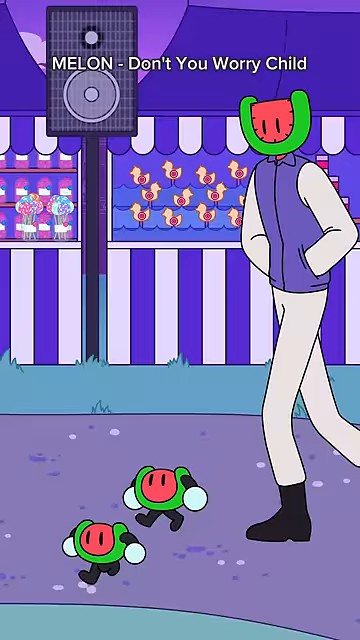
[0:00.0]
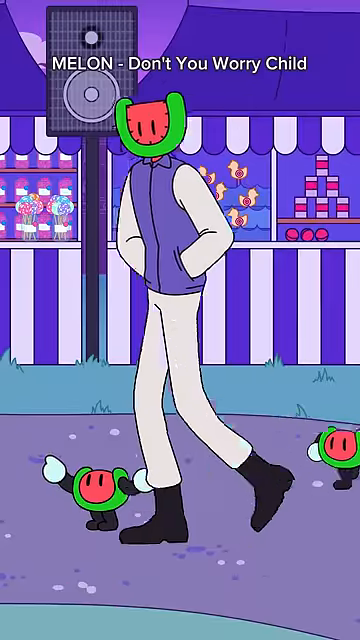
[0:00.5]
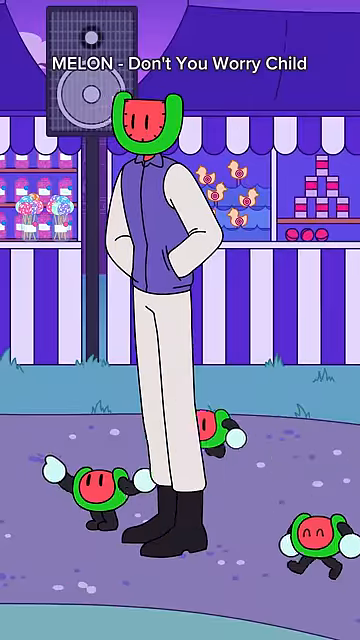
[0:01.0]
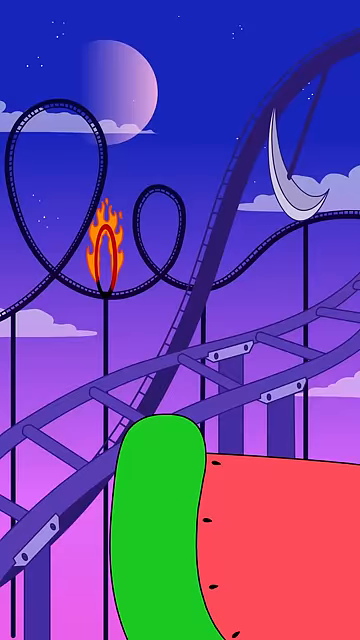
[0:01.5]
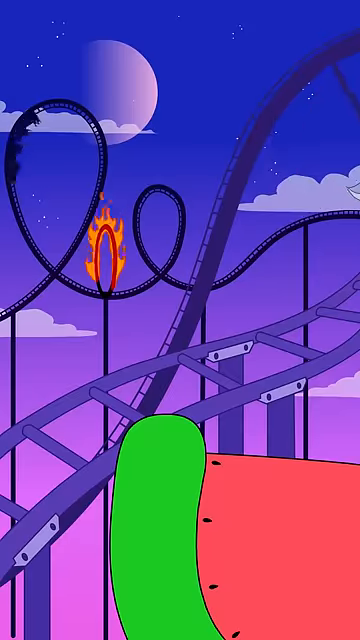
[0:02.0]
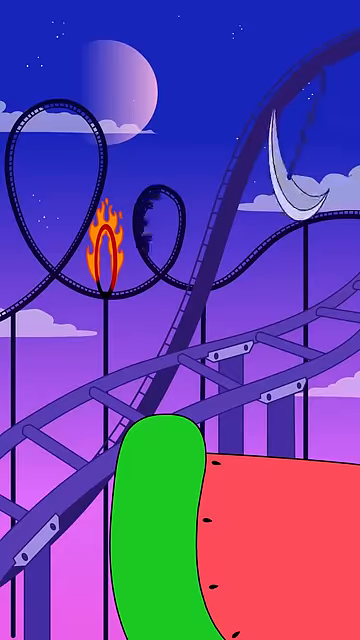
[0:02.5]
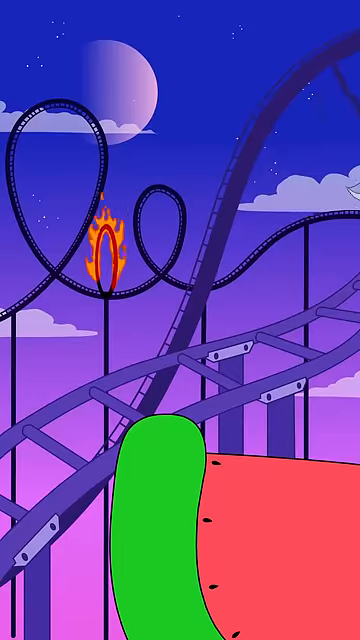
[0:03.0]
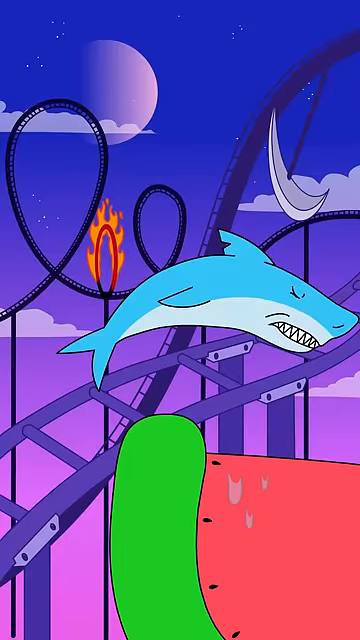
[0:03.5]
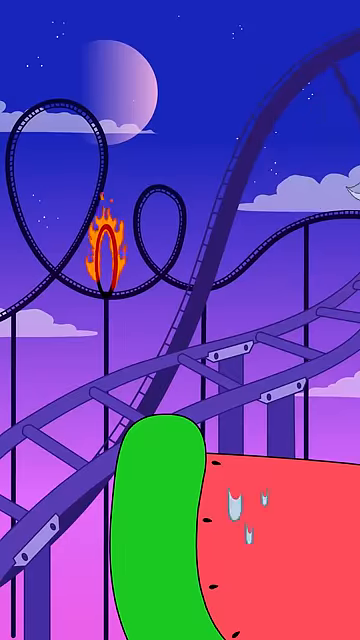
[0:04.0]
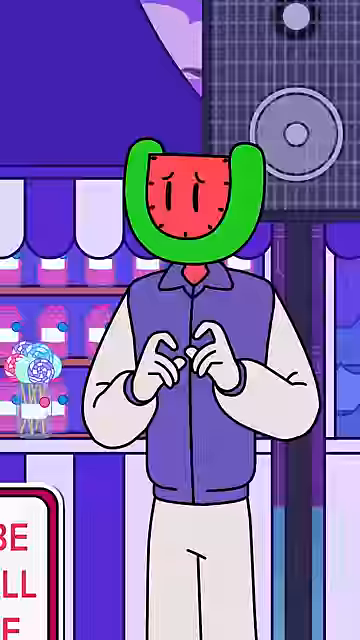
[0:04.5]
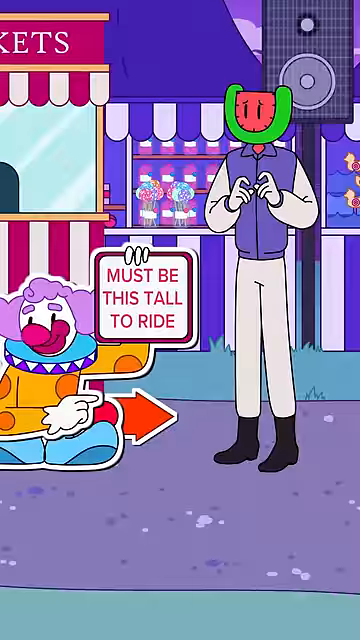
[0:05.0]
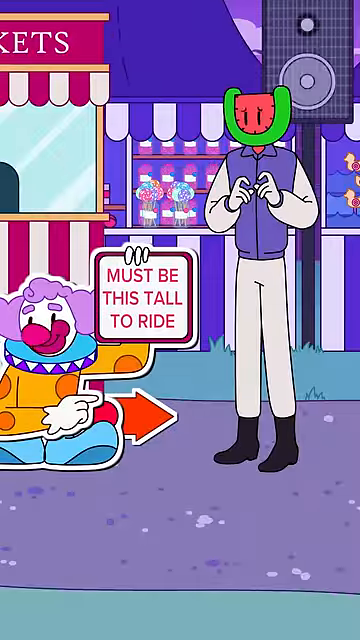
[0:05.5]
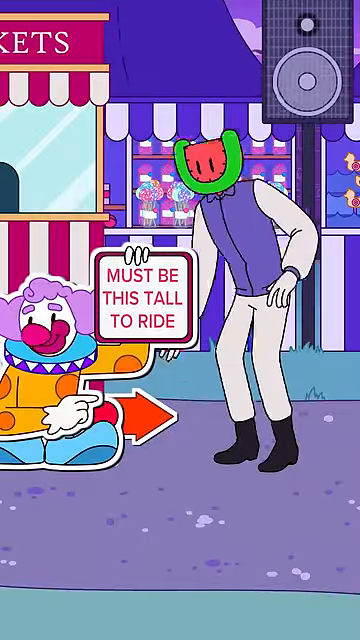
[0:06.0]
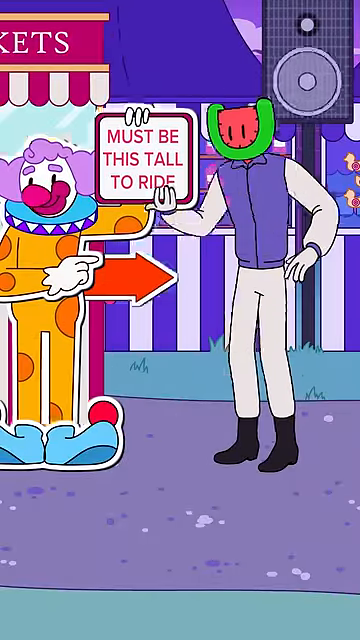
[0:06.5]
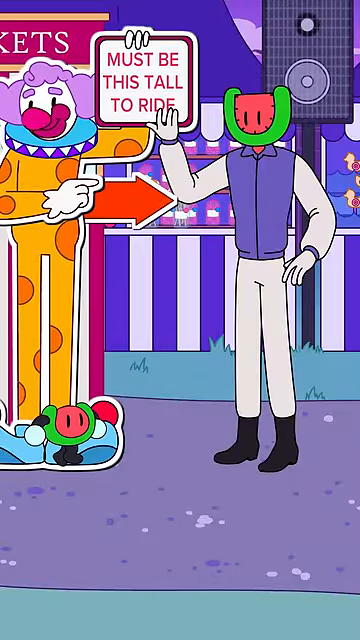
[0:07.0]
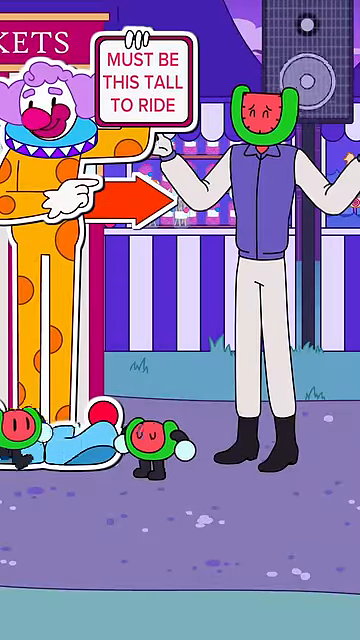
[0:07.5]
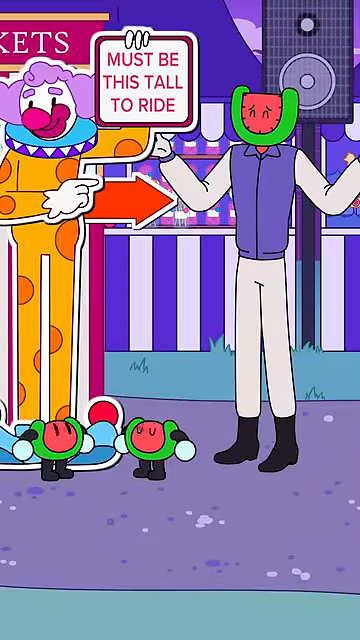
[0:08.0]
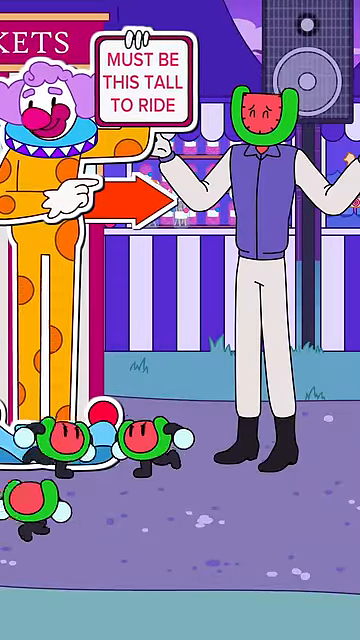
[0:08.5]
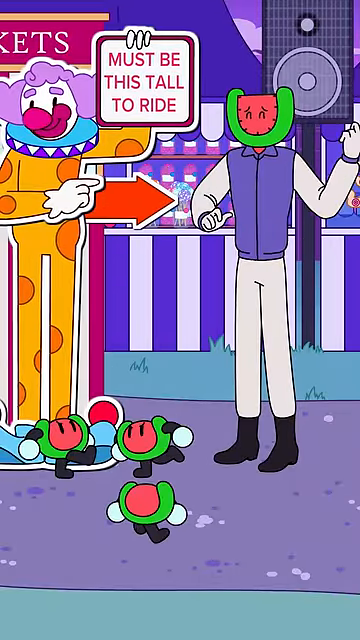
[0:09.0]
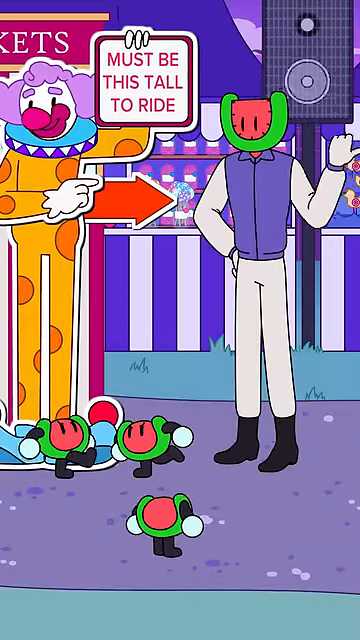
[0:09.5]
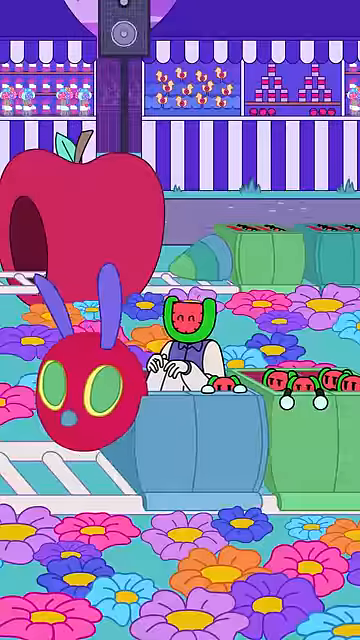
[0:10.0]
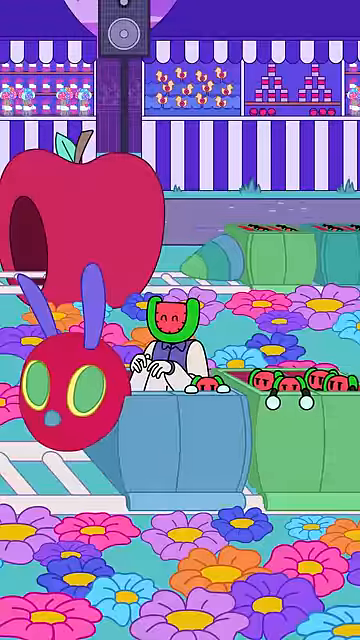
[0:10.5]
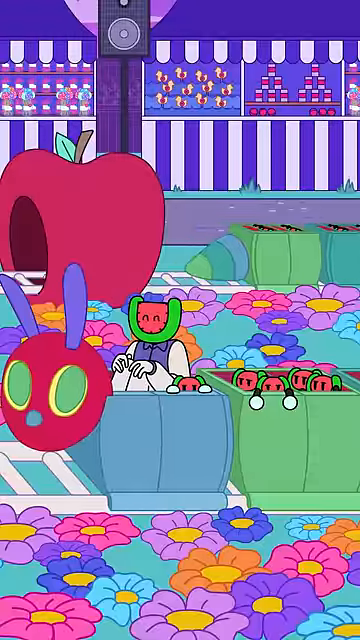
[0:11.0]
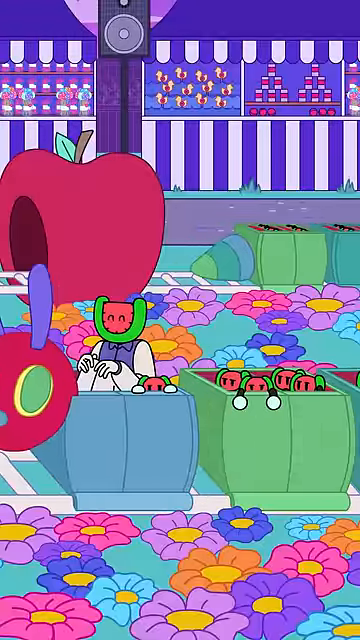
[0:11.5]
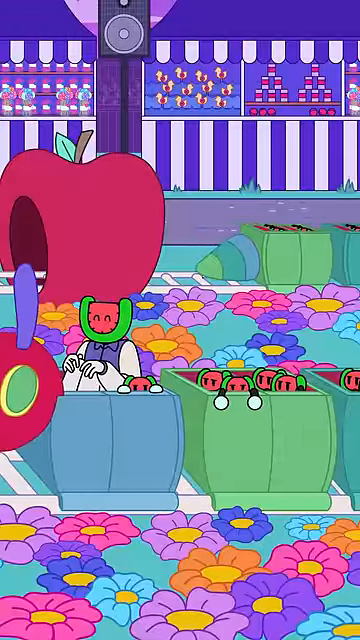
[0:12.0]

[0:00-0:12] In this animated scene, a really tall character wears white pants, black shoes and a purple vest, and has a red and green face that looks like a watermelon. Walking around him are very similar-looking characters that are quite short, almost right off the ground; they appear to be just faces with black shoes, with red and green faces. In the background there is a tall speaker that is black and, apparently, purple and white, and there is also some grass. The scene then changes to a roller coaster that looks elaborate, with a fire ring and a lot of upside-down twists and turns. There is also a large red and green item, and a shark jumps over the roller coaster. Next, the characters are standing next to a sign that has a clown on it and says "must be this tall to ride". The tall character pulls the sign up, apparently to make it higher, and the smaller characters come by, stand next to him and stomp for a few seconds. After that, the characters are all together on a ride: two are in one cart and three smaller ones are in a green one. The ride appears to be going slowly and does not go very far before the scene ends.